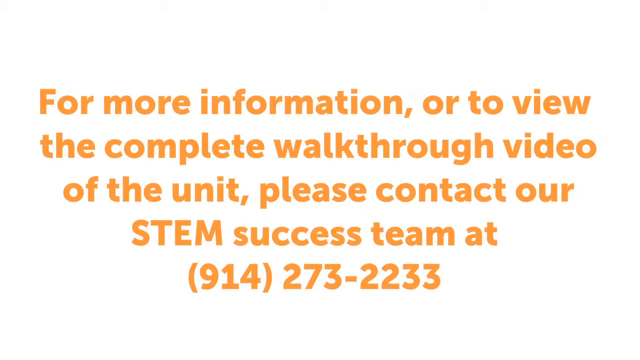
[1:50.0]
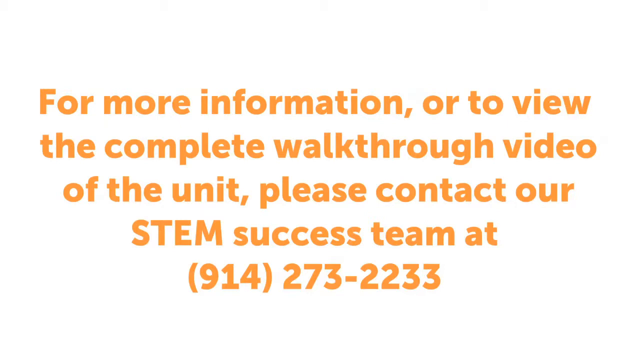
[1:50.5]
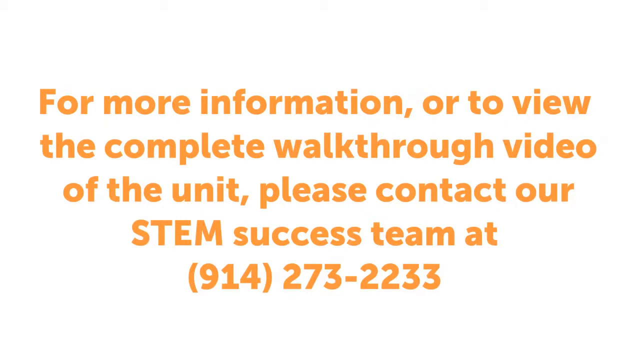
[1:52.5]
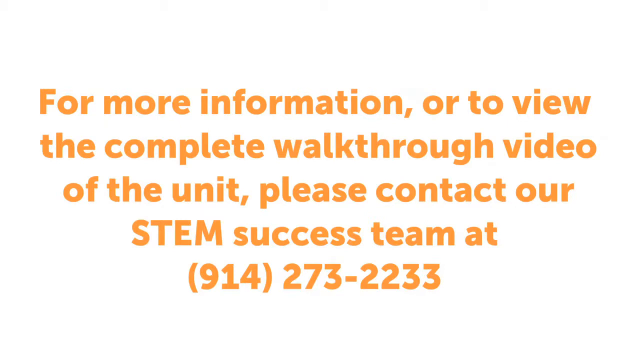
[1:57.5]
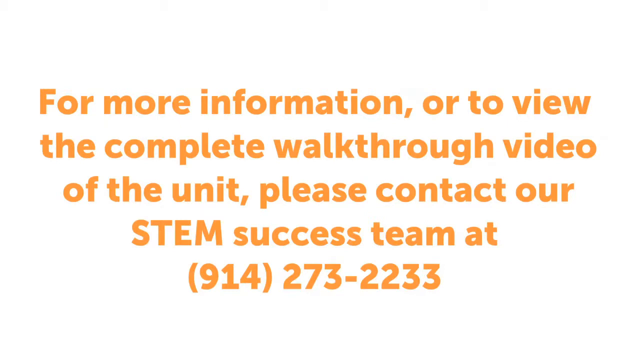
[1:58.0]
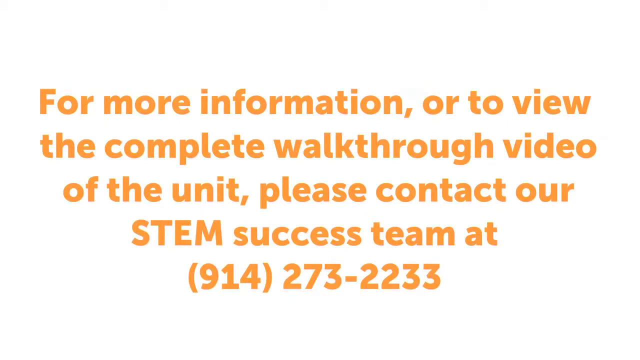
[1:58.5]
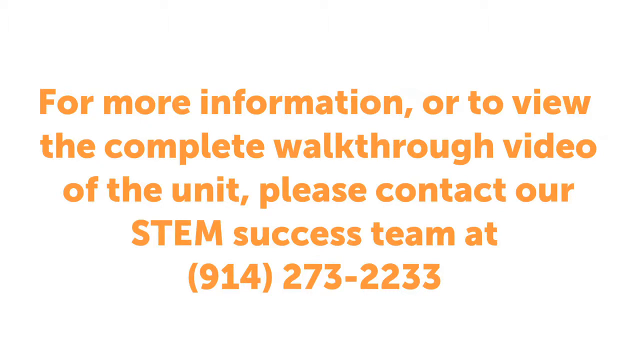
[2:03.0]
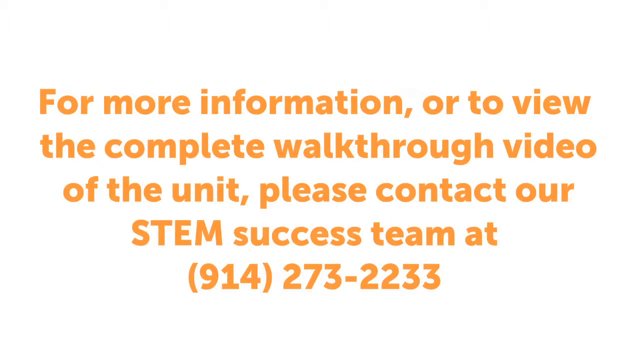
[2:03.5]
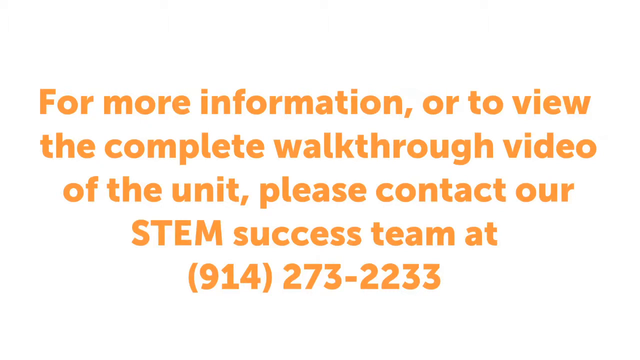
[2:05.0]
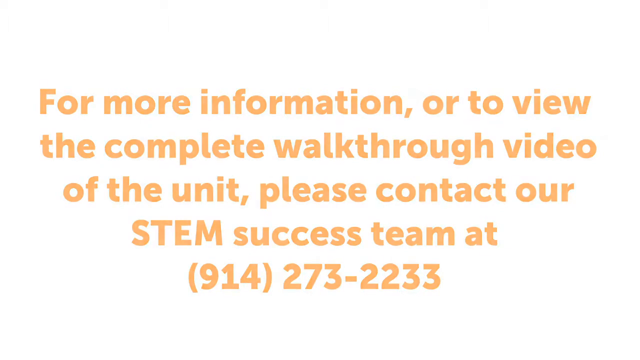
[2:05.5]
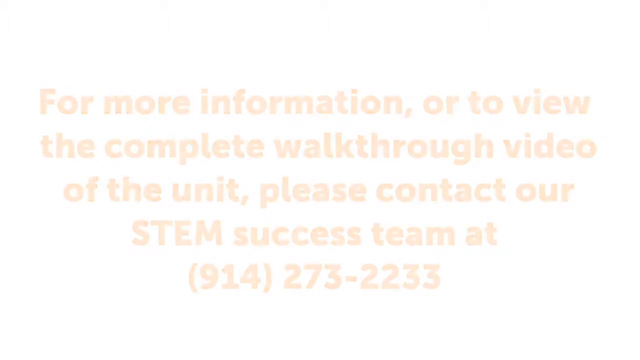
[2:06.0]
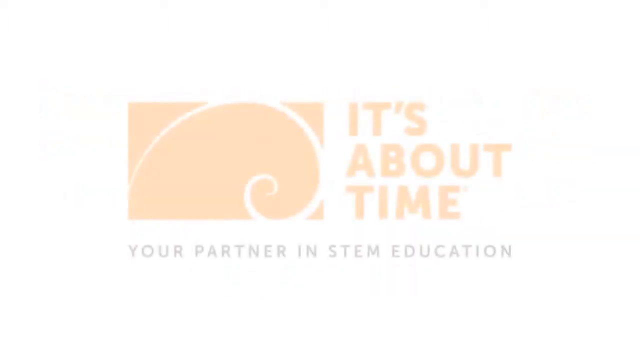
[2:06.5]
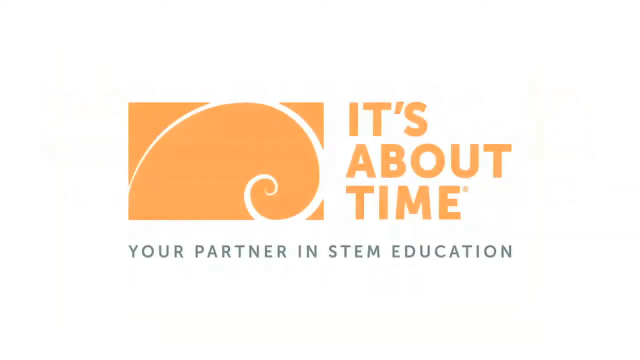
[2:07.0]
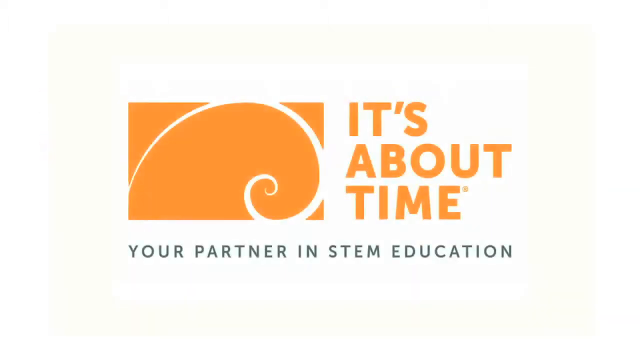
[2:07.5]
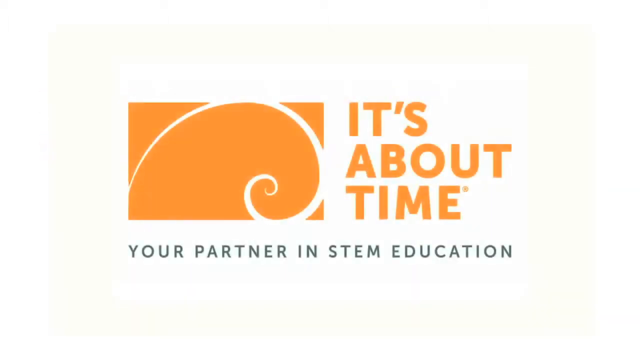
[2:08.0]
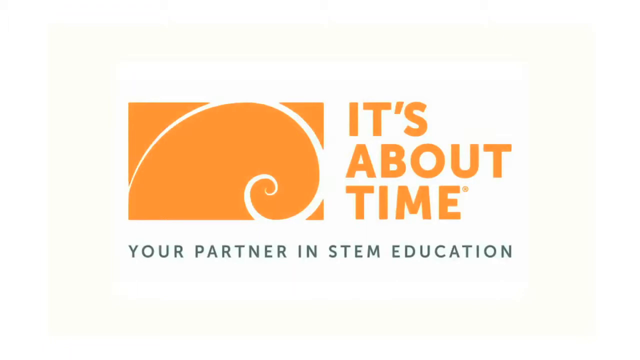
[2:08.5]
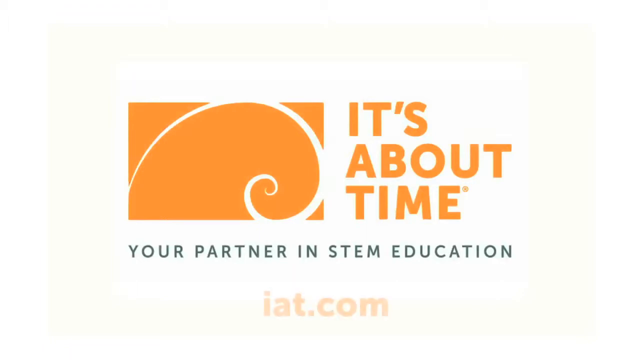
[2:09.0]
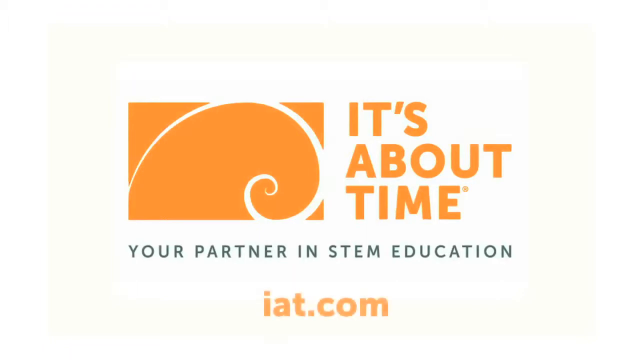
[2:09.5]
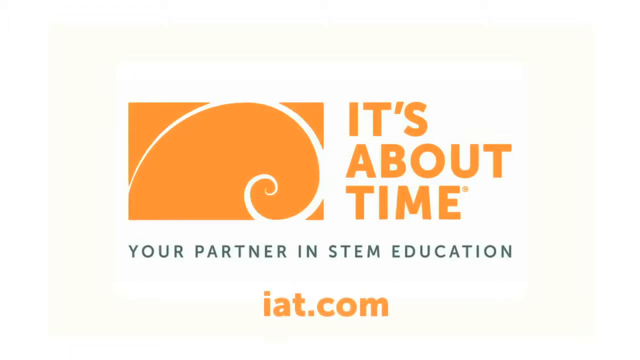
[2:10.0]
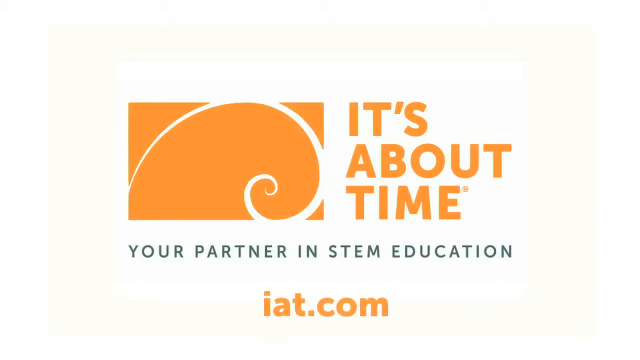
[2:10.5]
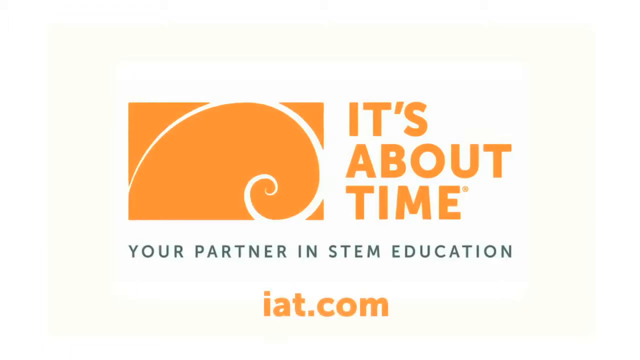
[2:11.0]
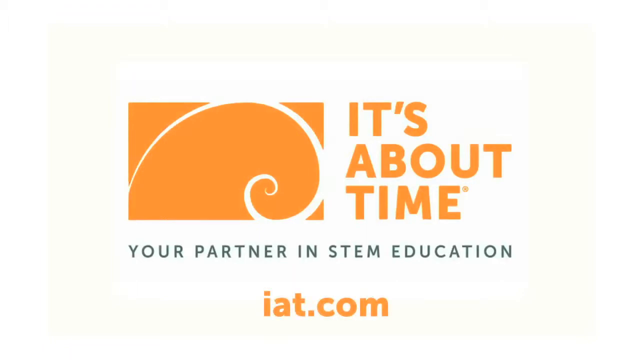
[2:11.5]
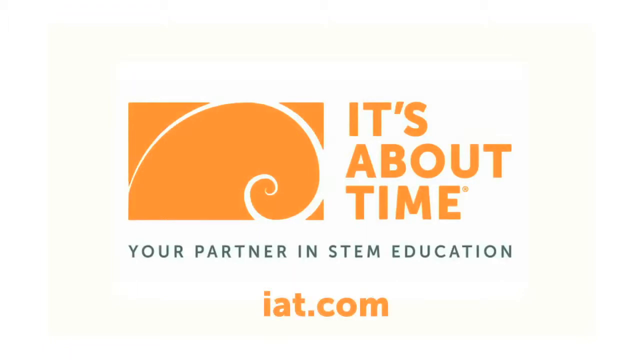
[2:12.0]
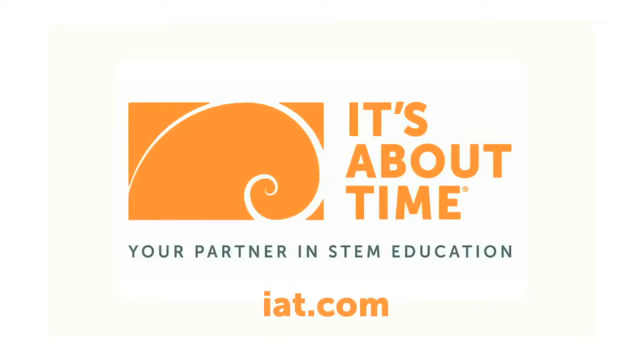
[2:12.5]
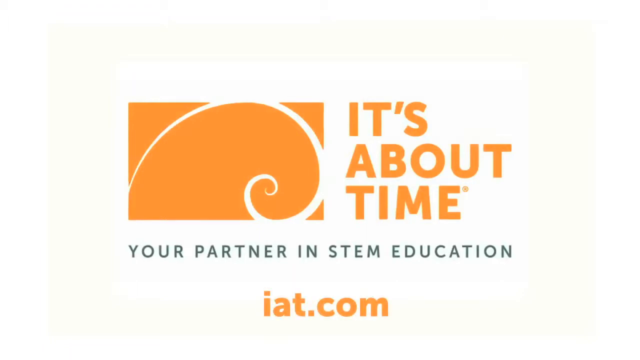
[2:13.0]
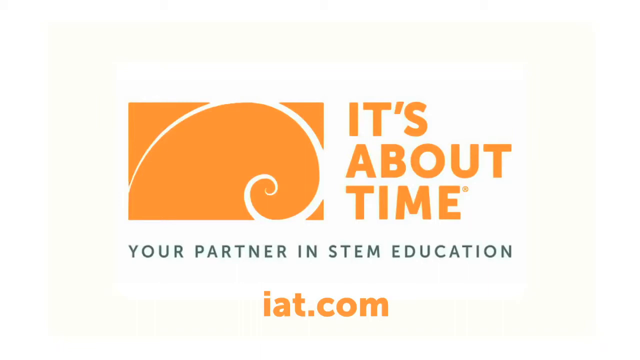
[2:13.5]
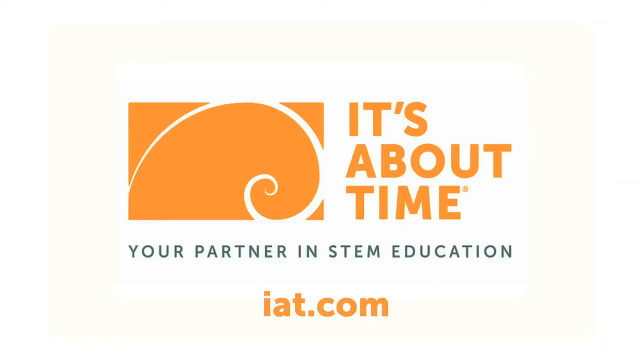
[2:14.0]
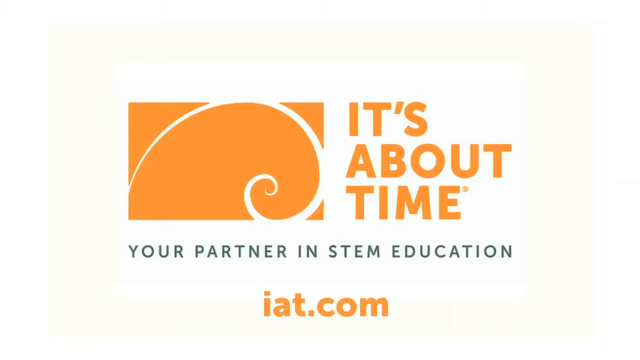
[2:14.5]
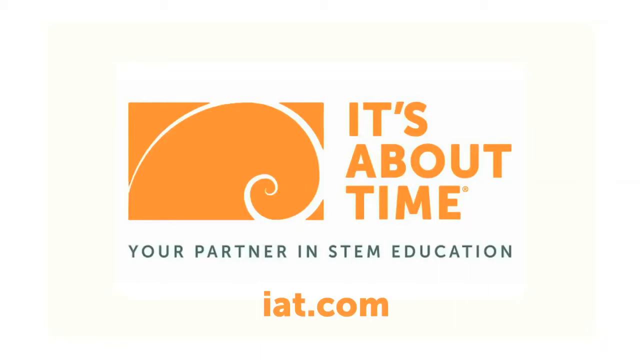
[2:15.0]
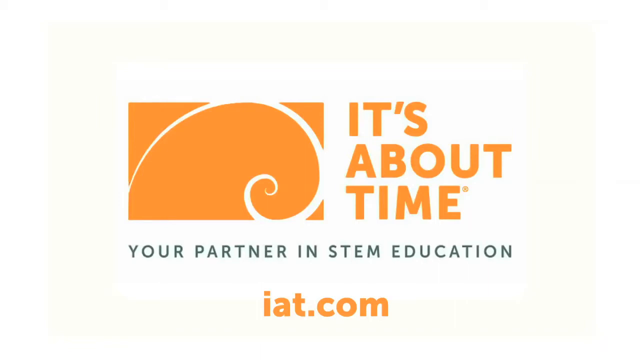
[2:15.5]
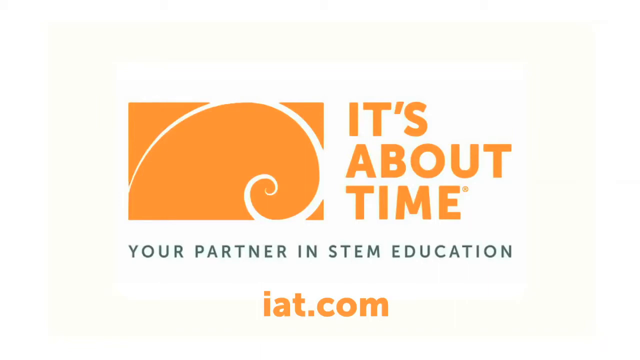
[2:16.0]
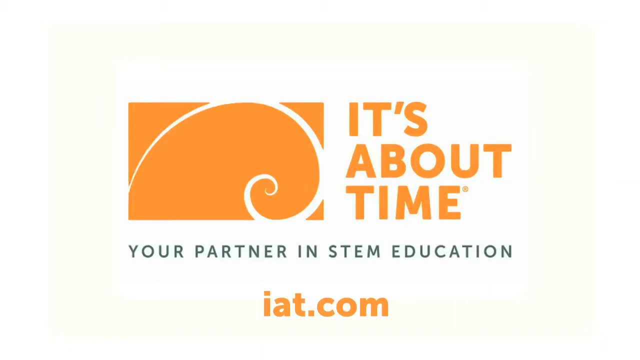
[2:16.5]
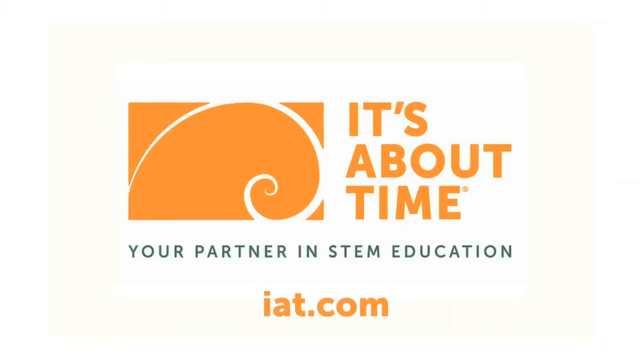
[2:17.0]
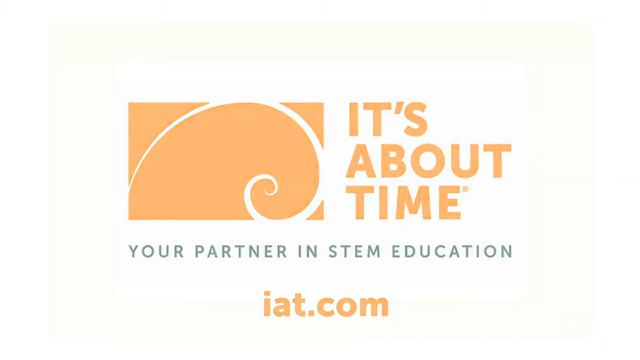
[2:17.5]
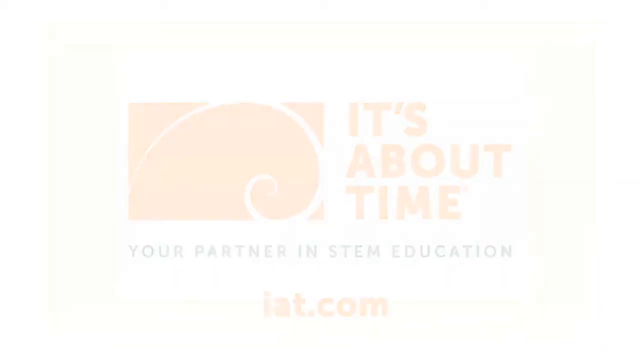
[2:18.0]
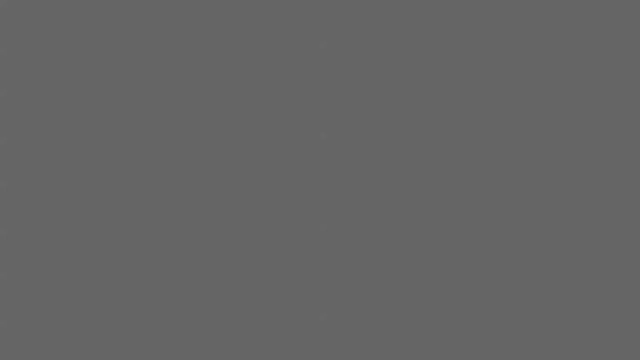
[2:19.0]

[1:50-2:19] The children take measurements while the teacher guides them from behind. The teacher shows them a yellow book. The children are seated in groups, in pairs. The challenges are shown, including the build a boat challenge, along with the number 914-273-2233.